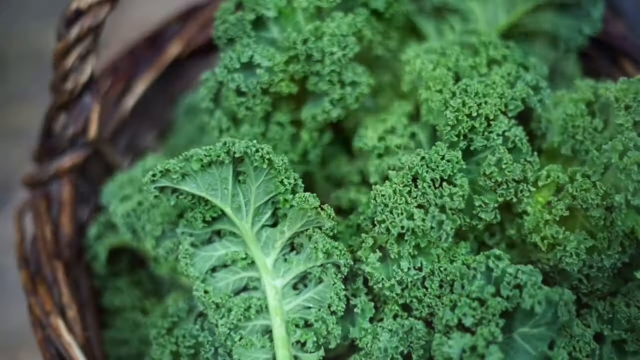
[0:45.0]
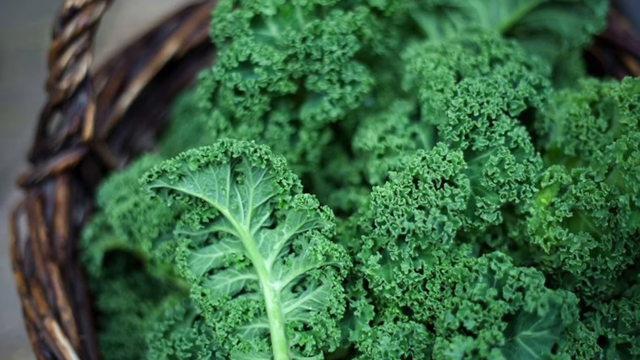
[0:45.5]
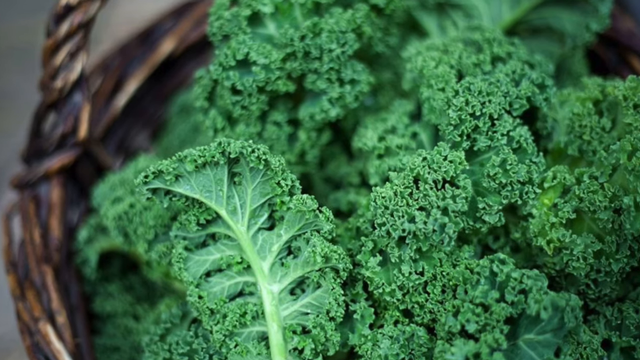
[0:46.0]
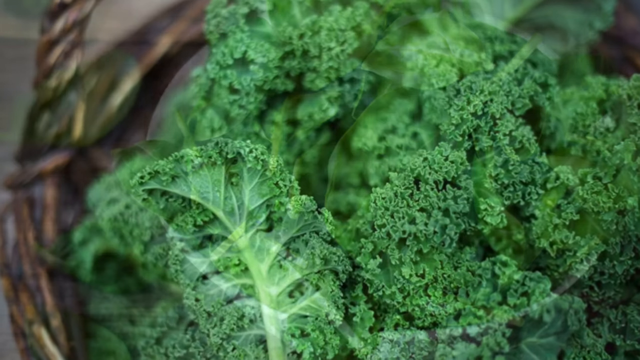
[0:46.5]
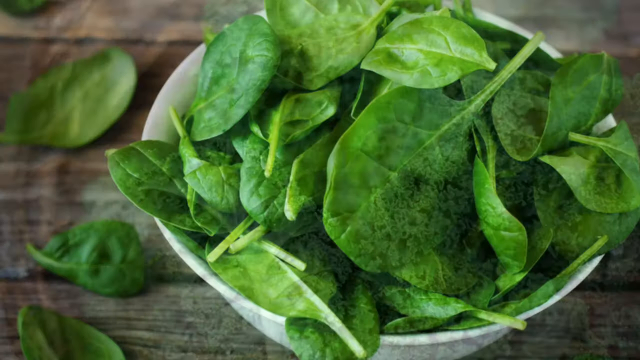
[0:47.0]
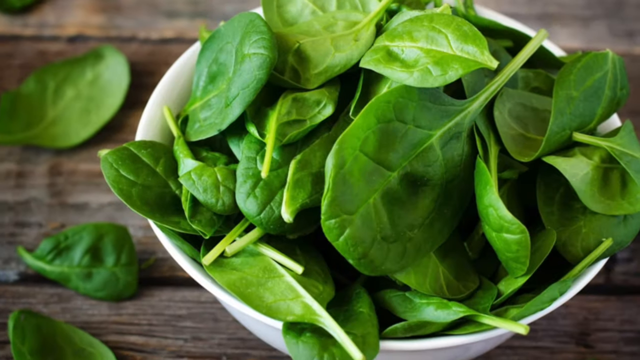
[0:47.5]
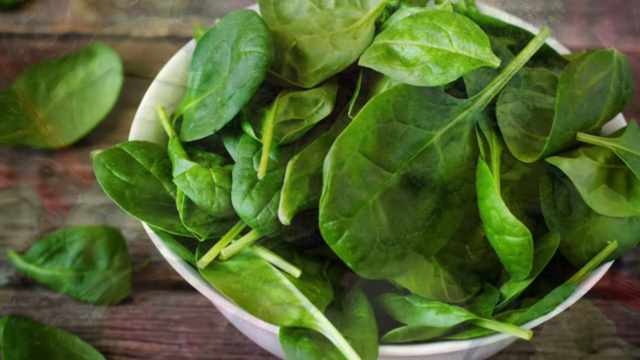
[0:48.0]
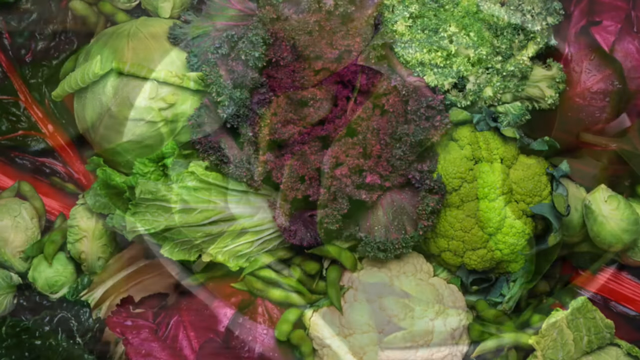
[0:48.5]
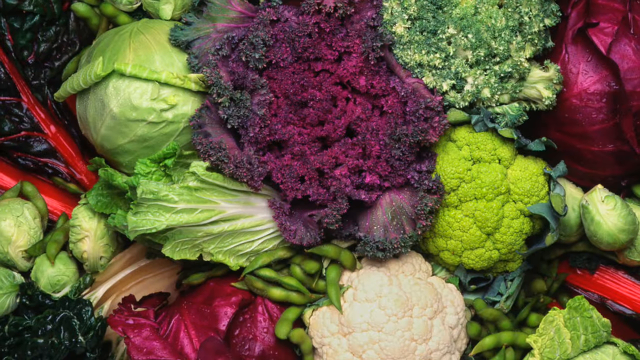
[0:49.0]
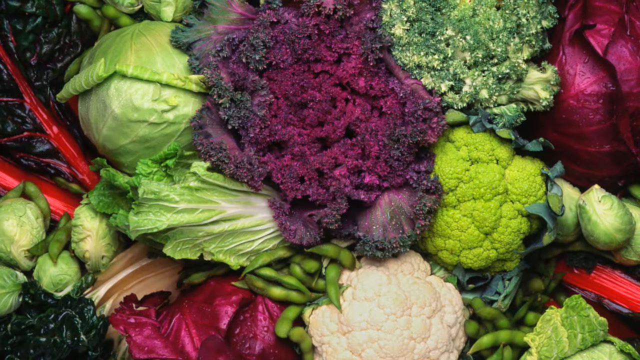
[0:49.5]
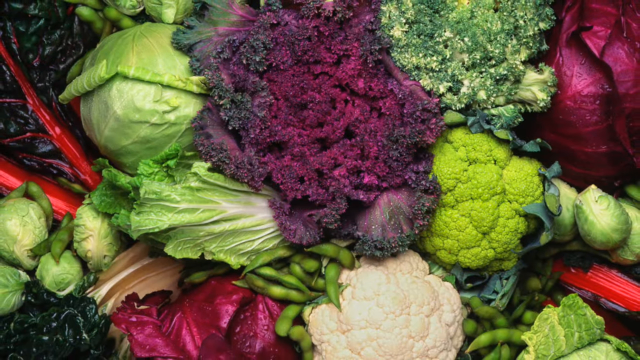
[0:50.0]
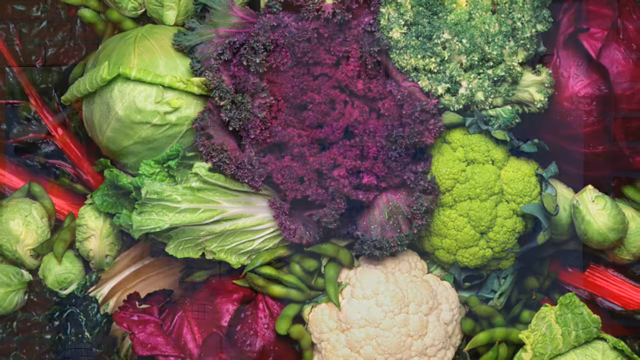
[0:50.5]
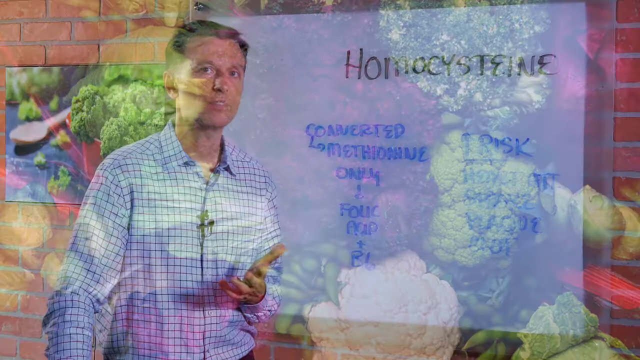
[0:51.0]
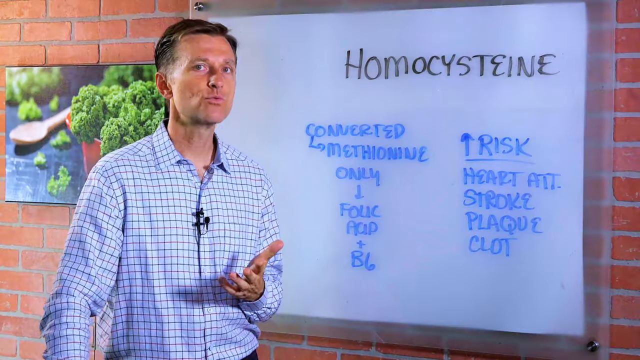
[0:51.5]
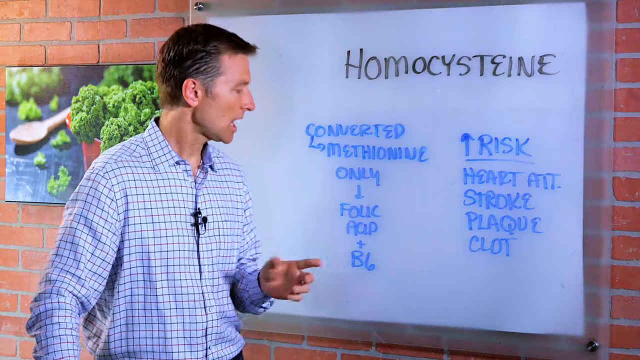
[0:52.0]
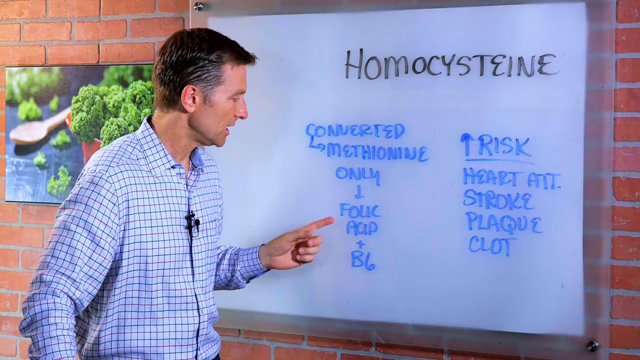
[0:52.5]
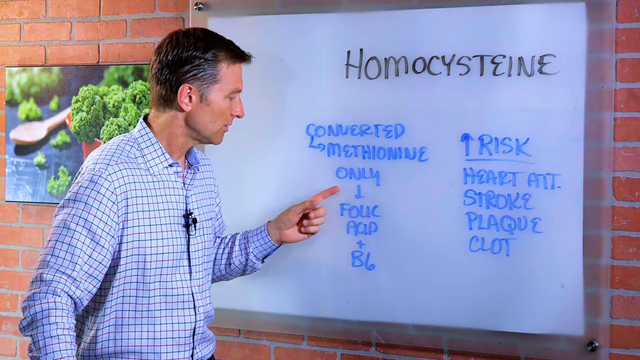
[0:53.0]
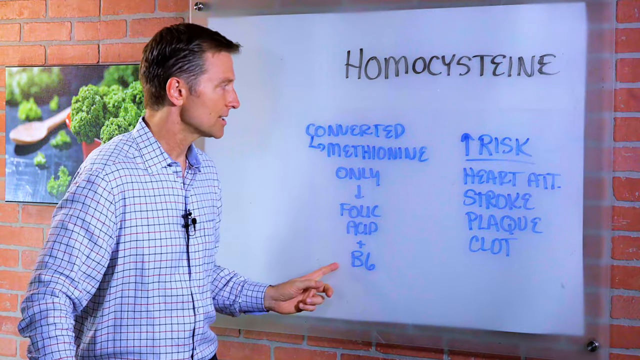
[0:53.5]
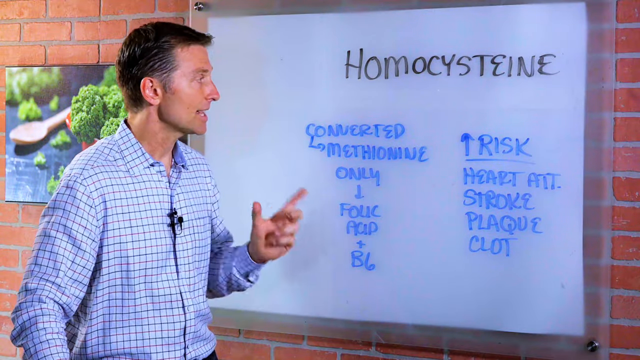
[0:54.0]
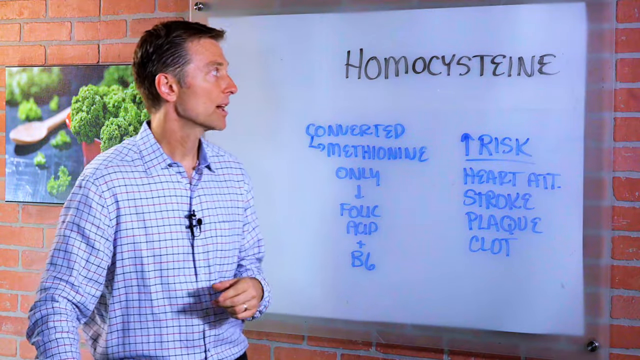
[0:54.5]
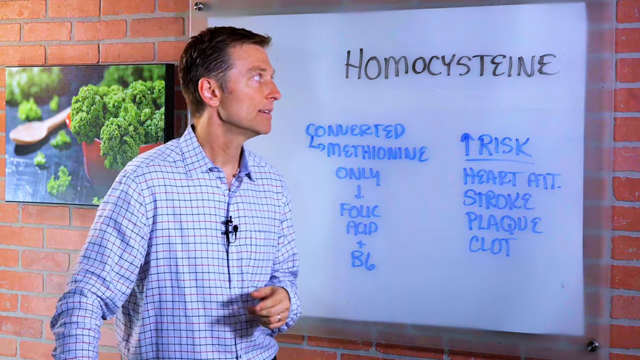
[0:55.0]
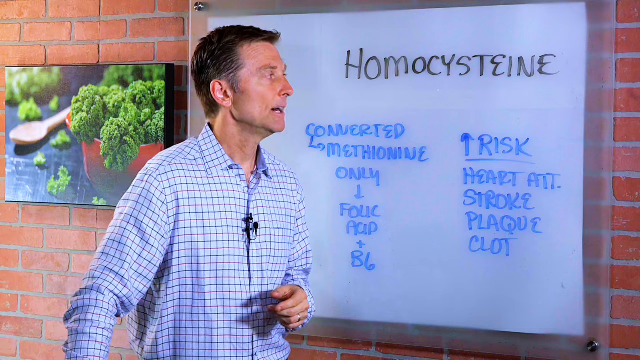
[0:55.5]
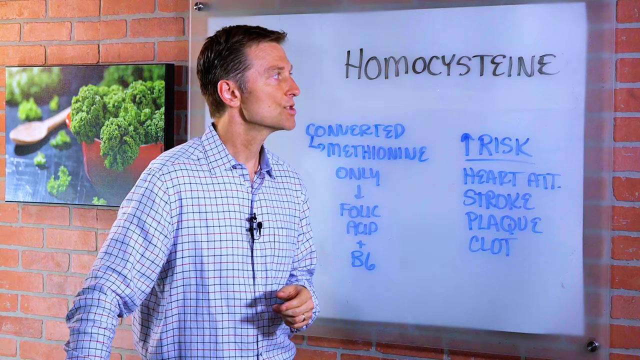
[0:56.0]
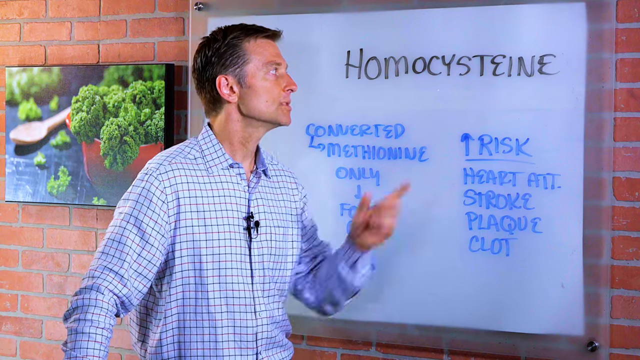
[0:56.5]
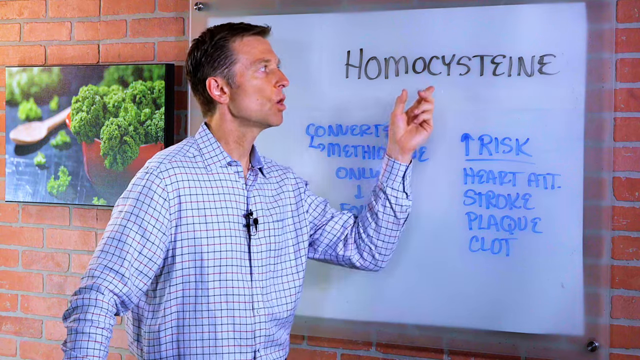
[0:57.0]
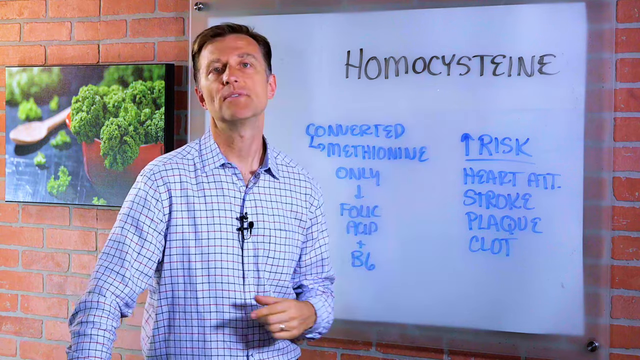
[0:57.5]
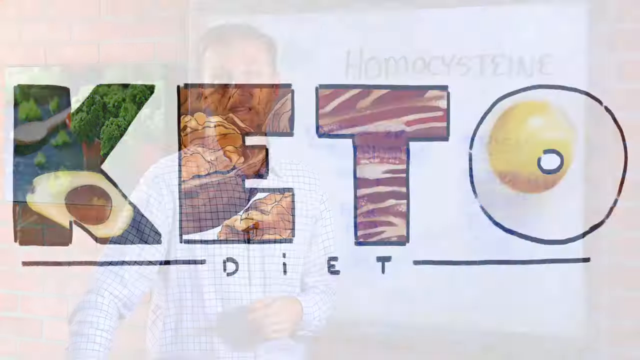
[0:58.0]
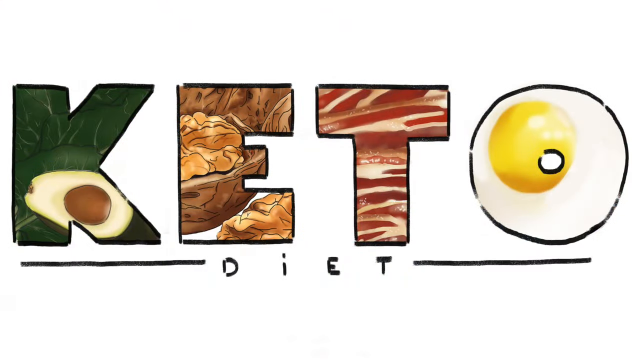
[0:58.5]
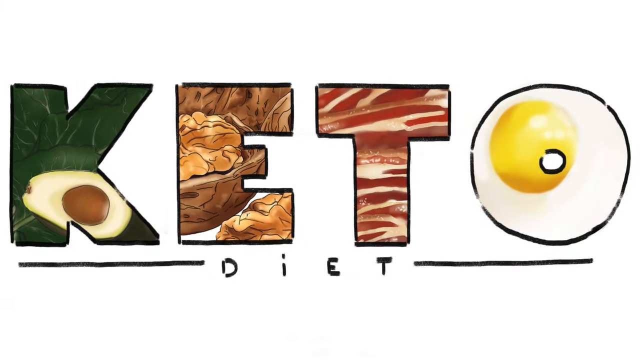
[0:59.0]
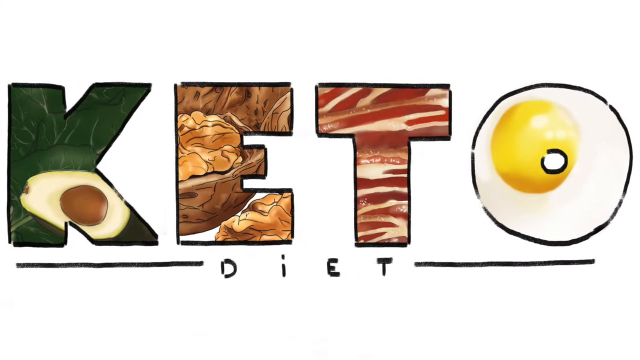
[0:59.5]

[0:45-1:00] There is a close-up of broccoli and other leafy greens along with many other vegetables. The scene cuts back to Dr. Berg, who quickly points to both "folic acid" and "B6" on the whiteboard. He also points to "homocysteine" again. The video then cuts to the words "keto diet" on the screen.